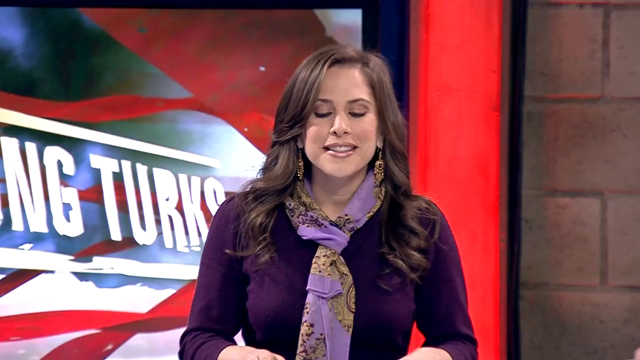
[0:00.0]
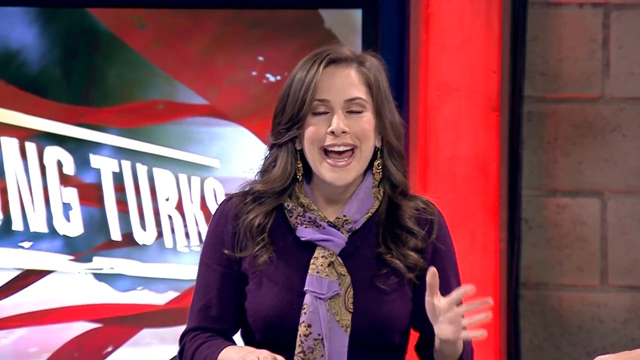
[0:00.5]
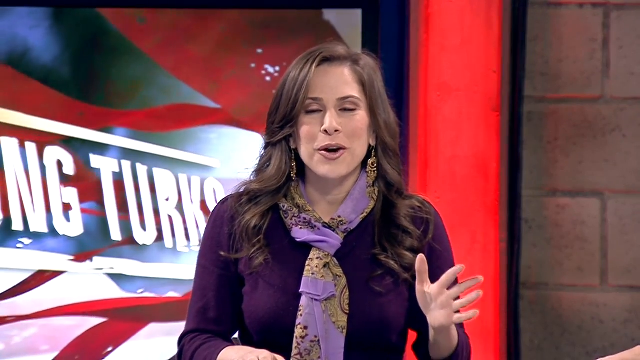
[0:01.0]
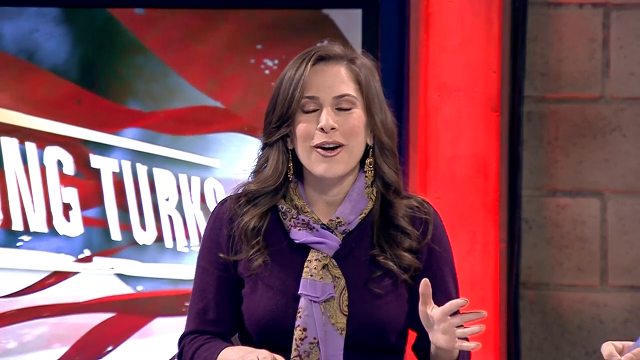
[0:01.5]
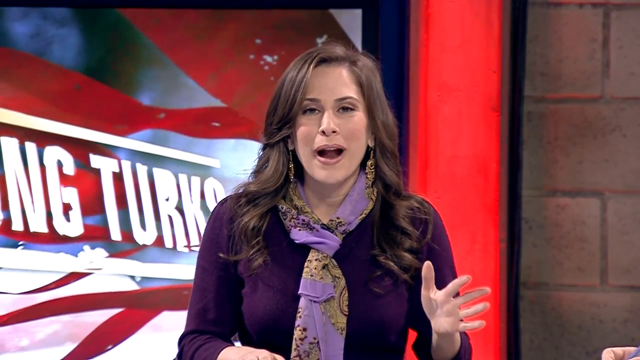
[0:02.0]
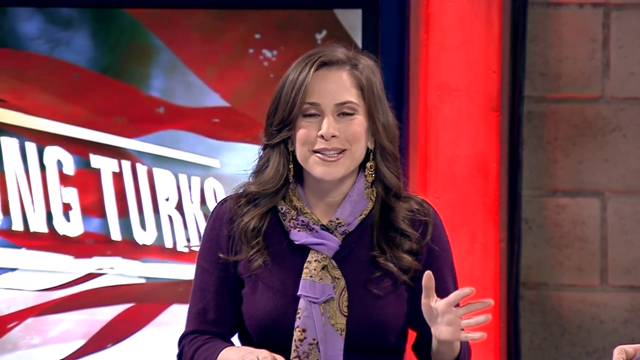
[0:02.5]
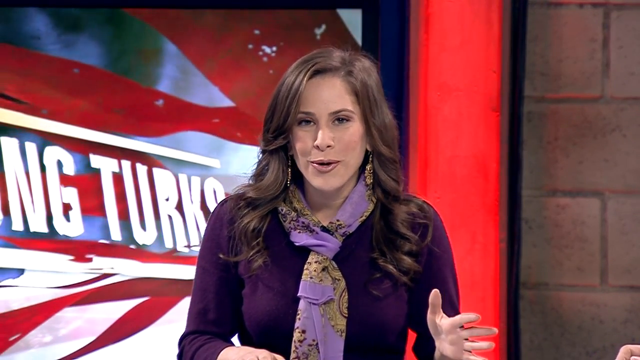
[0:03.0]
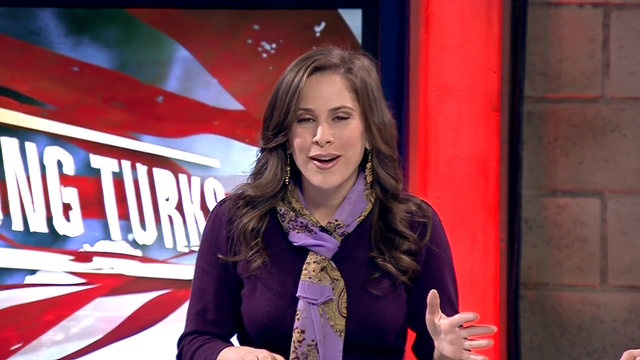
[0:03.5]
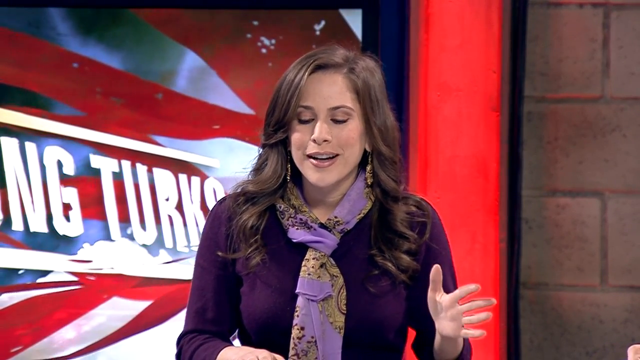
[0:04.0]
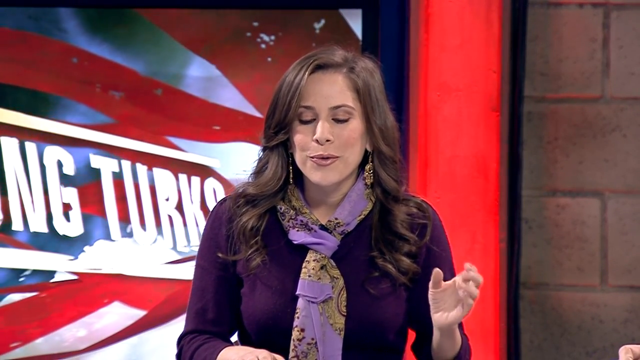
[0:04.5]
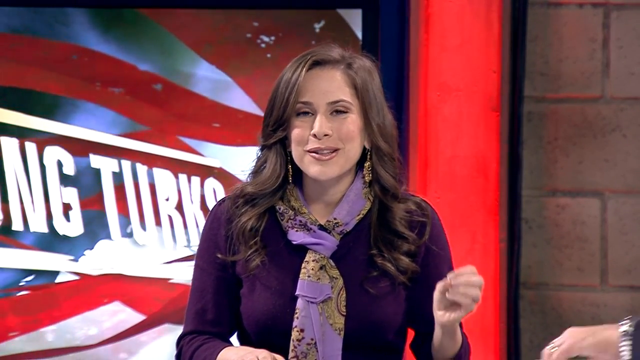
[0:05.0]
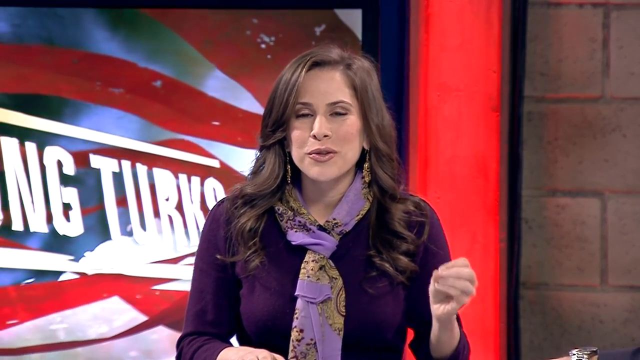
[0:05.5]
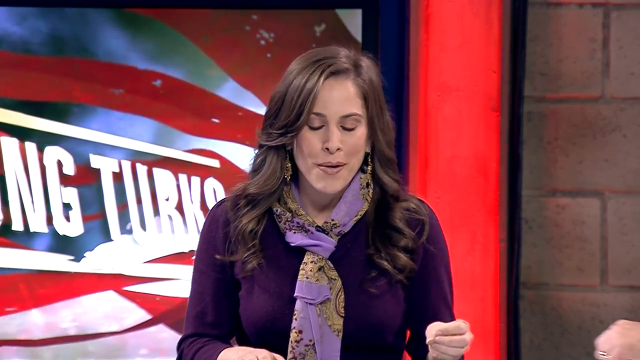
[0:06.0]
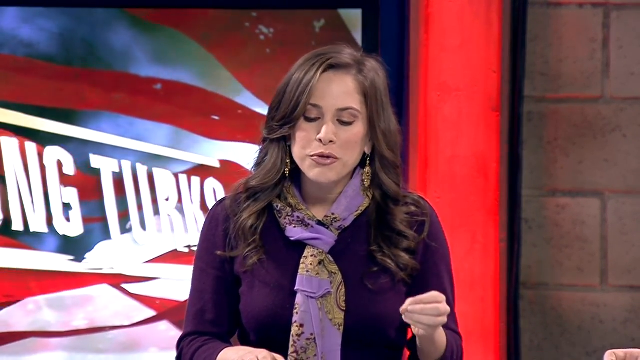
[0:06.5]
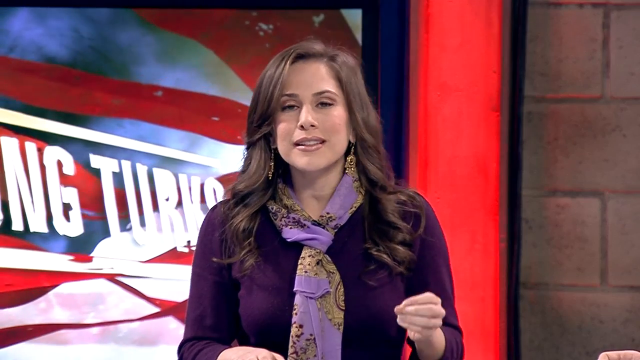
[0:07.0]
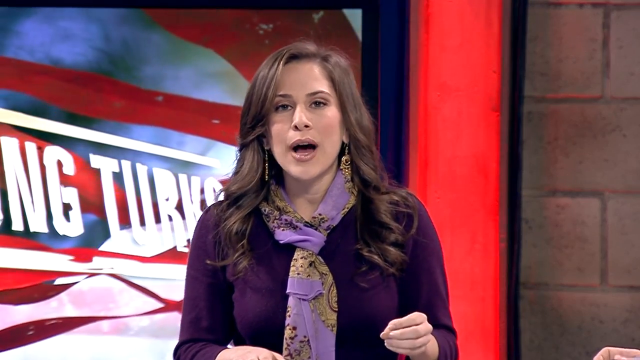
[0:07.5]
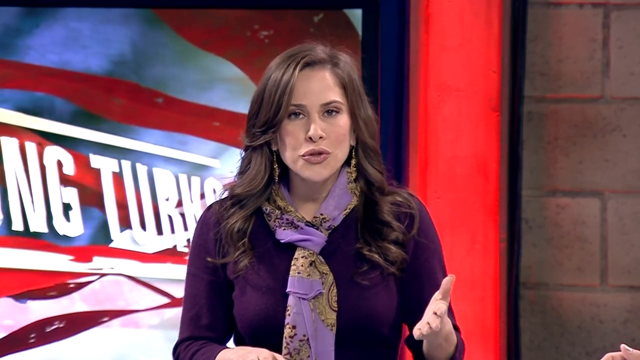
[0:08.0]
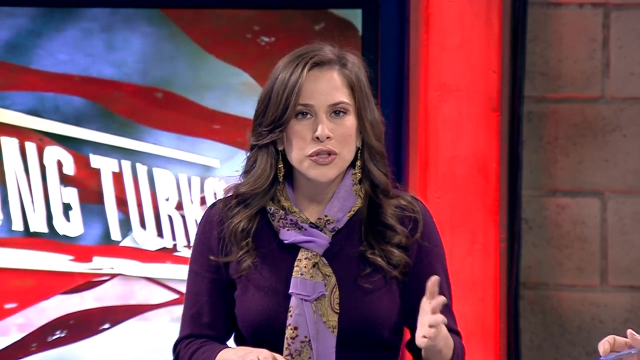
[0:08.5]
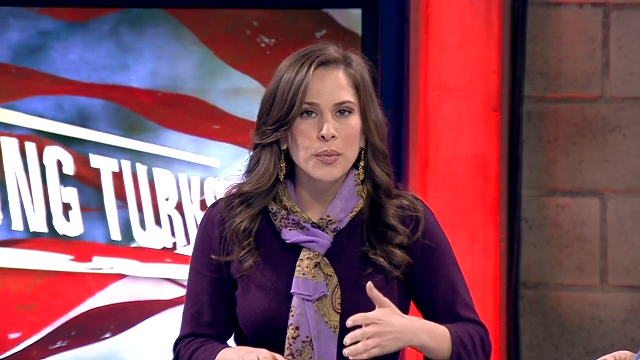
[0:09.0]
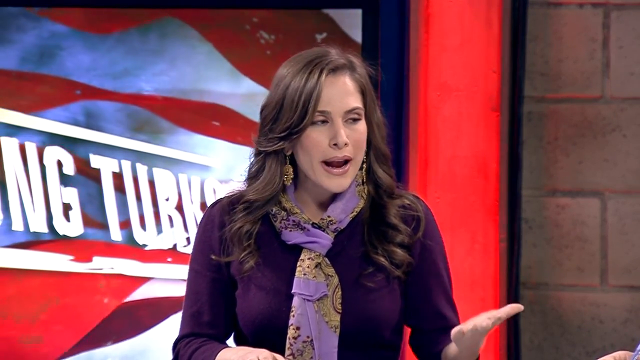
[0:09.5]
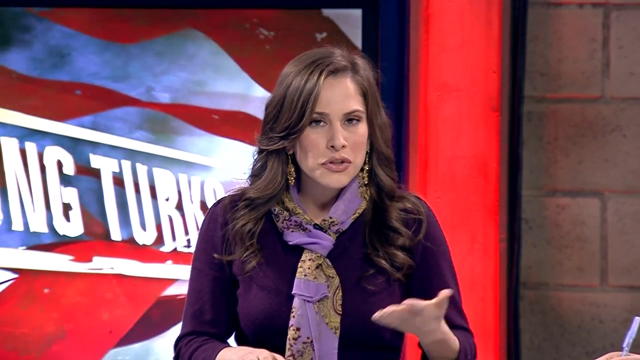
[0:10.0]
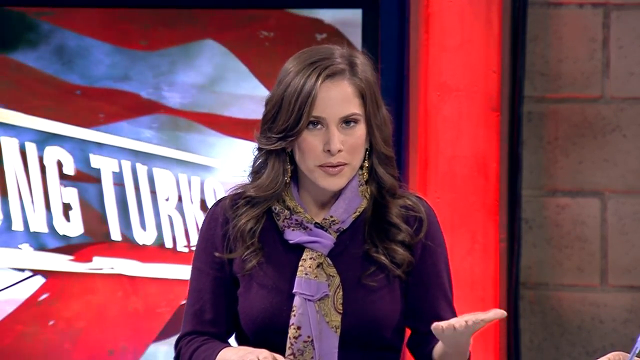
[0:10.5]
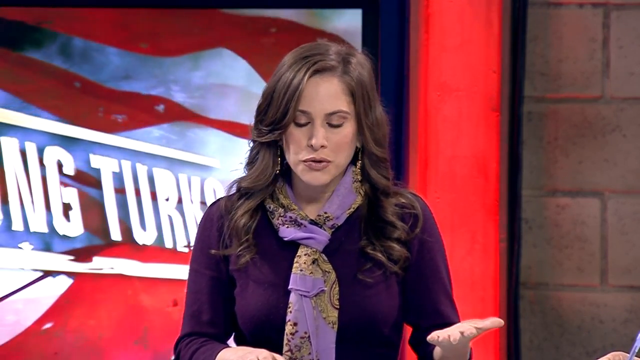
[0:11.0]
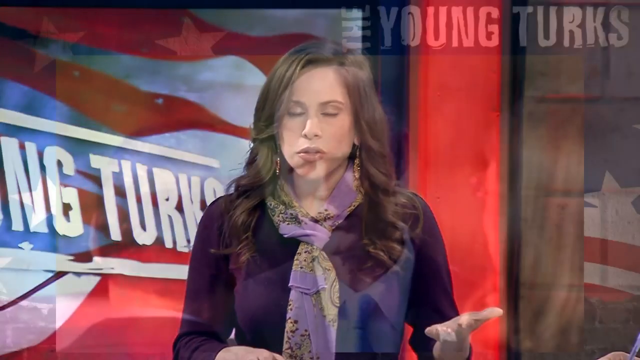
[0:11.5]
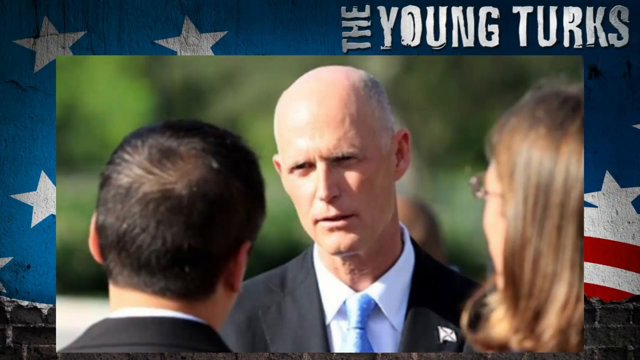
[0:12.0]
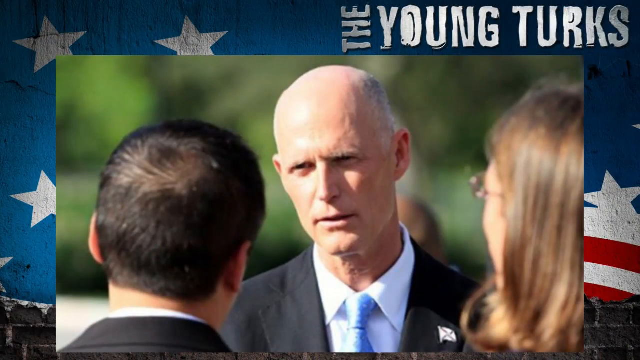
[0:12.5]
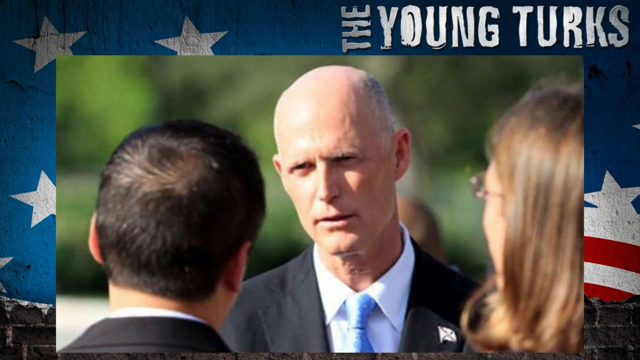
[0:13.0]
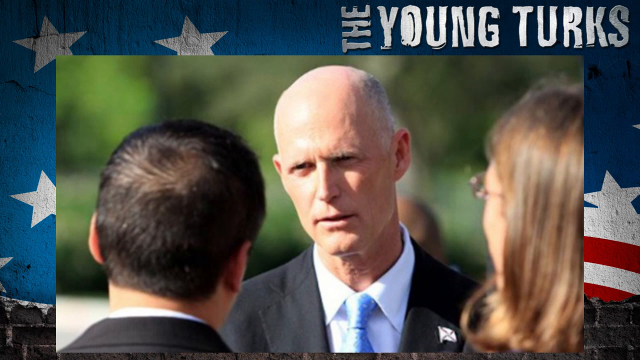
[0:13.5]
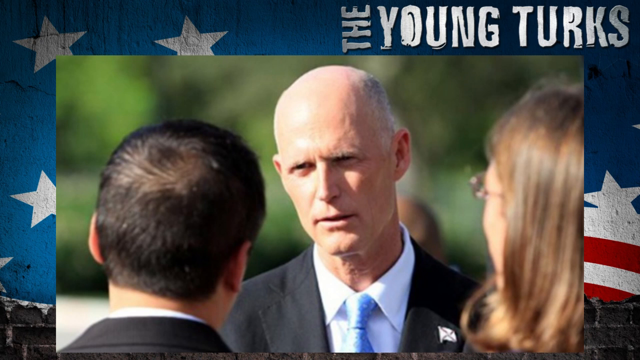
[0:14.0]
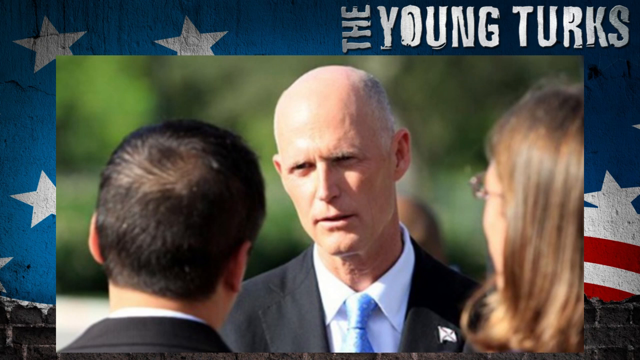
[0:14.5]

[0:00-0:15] A woman who looks like some kind of news reporter is talking. She wears a dark purple sweater with a light purple and tan scarf, has brown hair worn down and curled, and wears dangly gold earrings. She talks while using her hands a lot, apparently giving some kind of story or news report. The screen pans to a bald man shown in a frame within the screen, looking at a man who is looking at him; he appears to be in the middle of a conversation, with a woman to the right also looking at him. In the top right, text reads "The Young Turks" over a background like an American flag, with blue and white stars and red and white stripes. The framed screen with the man and the two people is in the middle. The man wears a dark blazer, either black or navy blue, a white shirt and a light blue tie, and the woman to the right of the screen has glasses, partly visible in her profile.